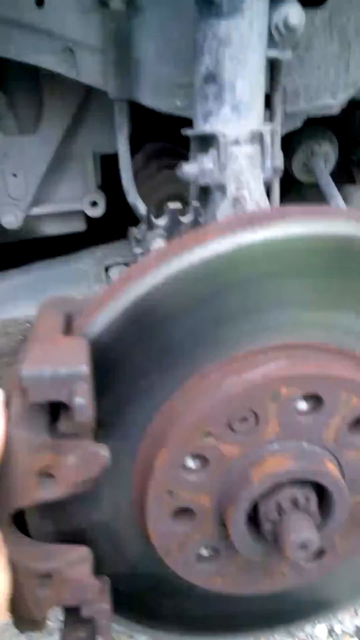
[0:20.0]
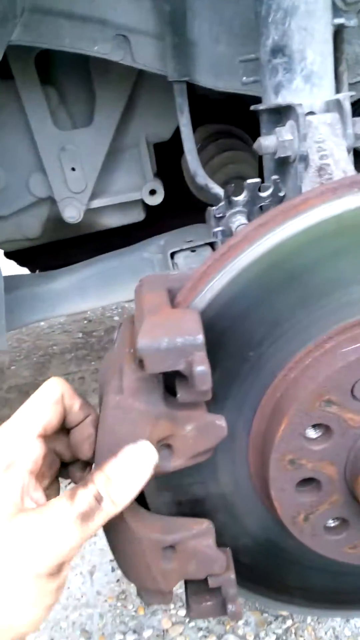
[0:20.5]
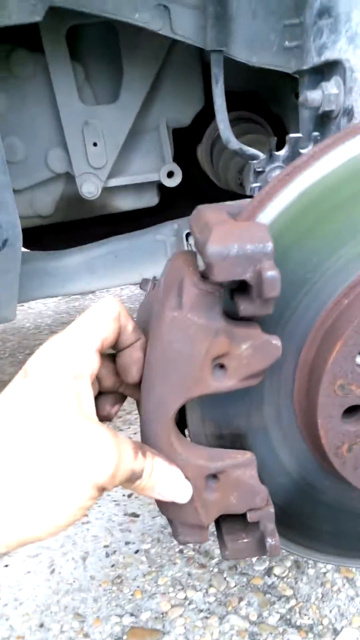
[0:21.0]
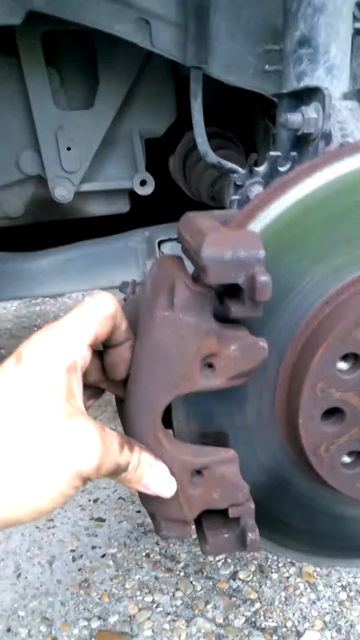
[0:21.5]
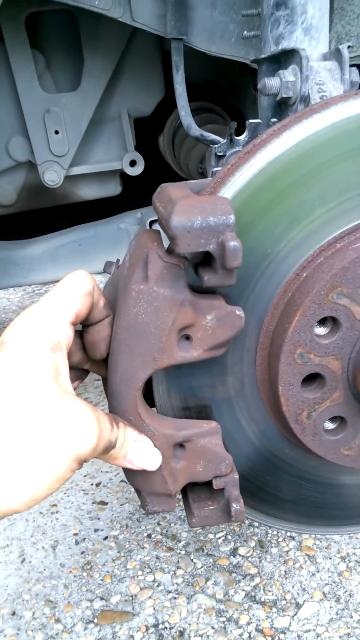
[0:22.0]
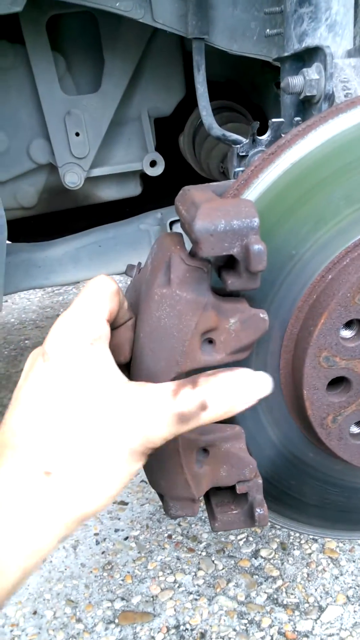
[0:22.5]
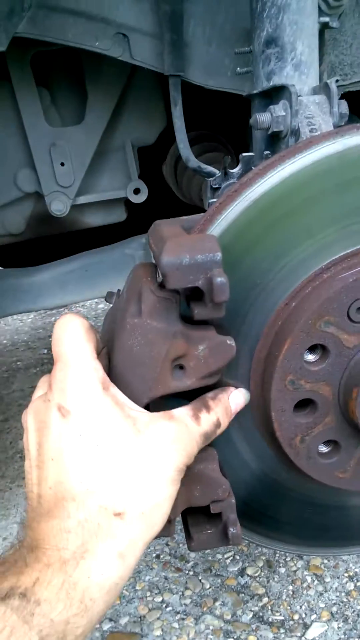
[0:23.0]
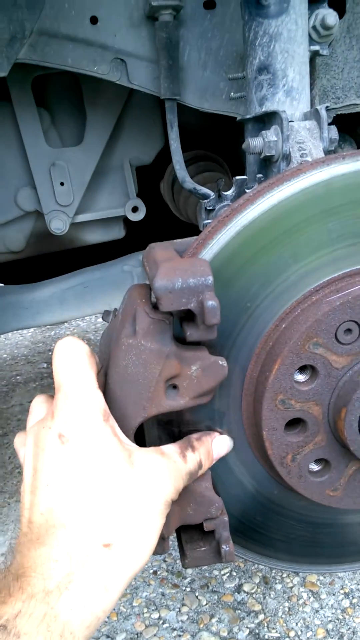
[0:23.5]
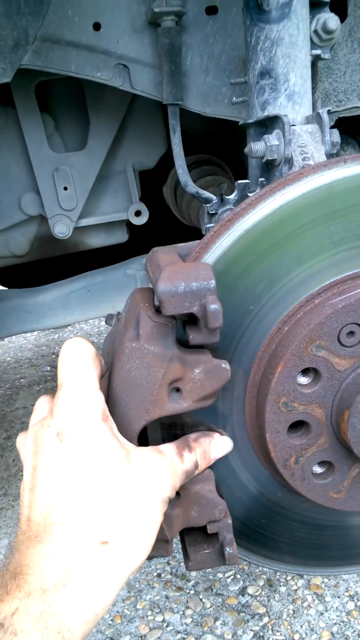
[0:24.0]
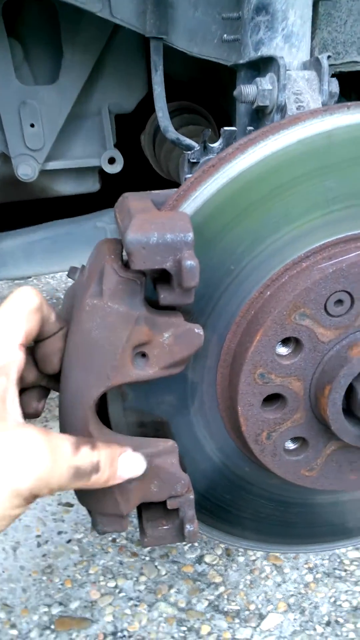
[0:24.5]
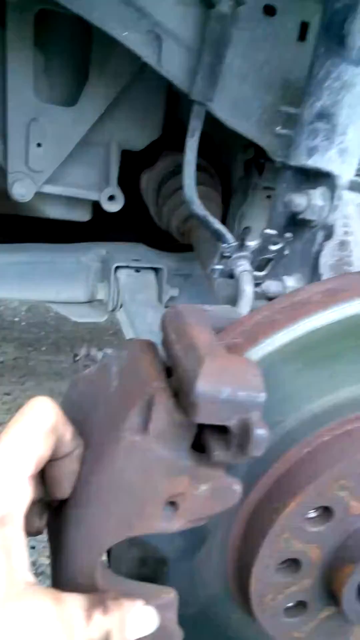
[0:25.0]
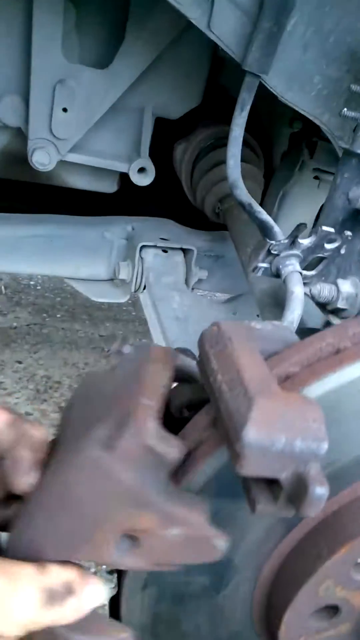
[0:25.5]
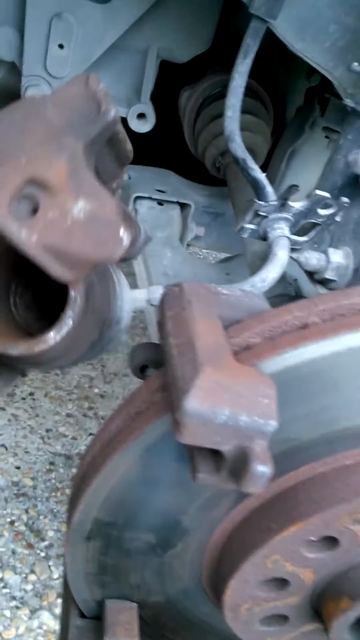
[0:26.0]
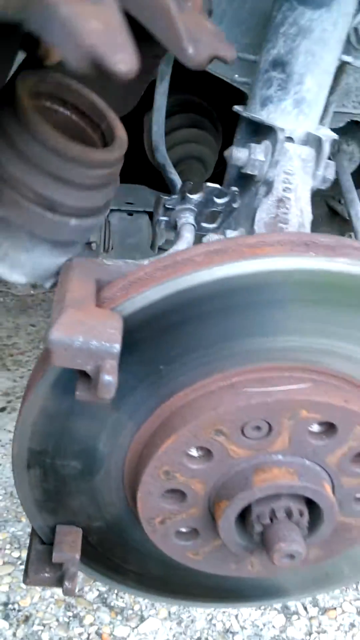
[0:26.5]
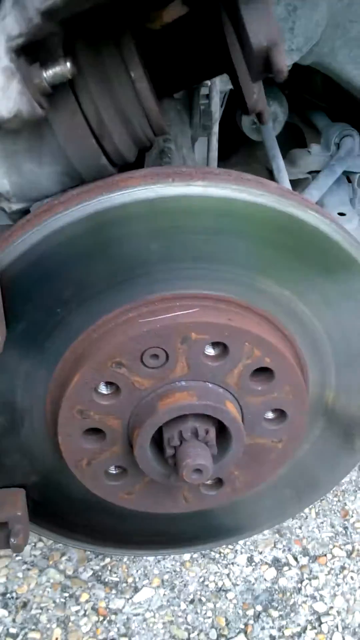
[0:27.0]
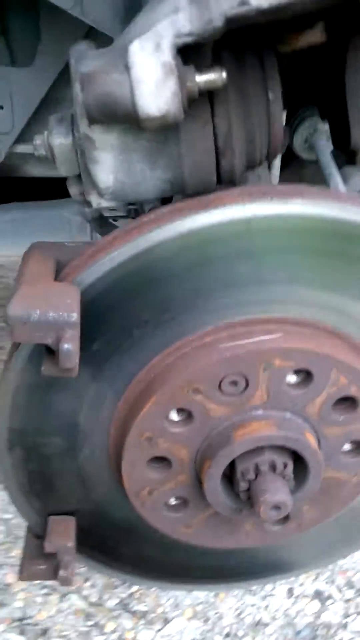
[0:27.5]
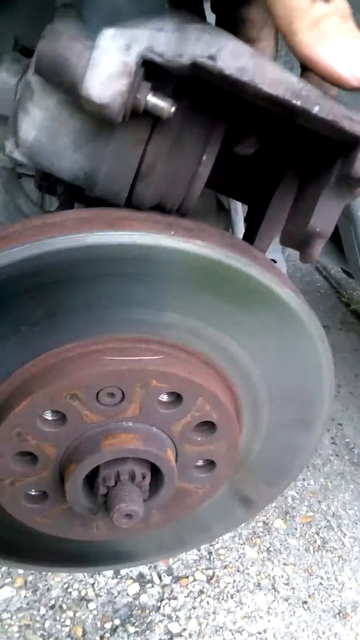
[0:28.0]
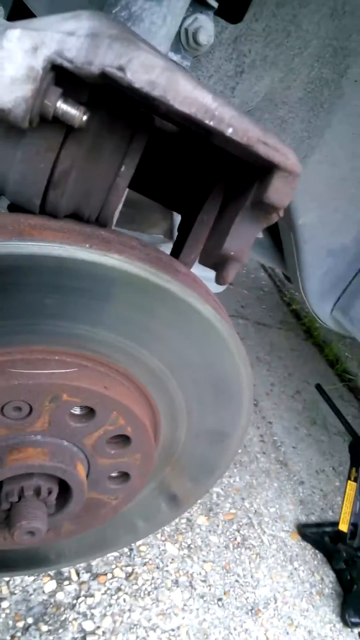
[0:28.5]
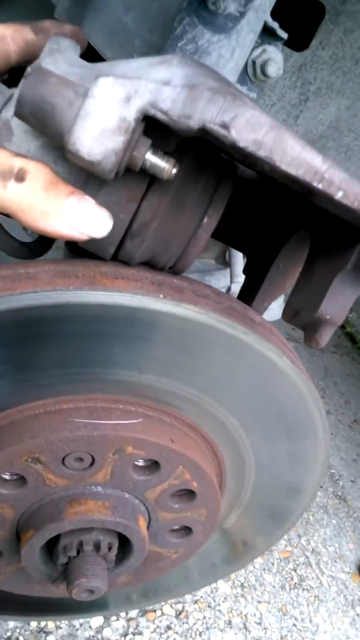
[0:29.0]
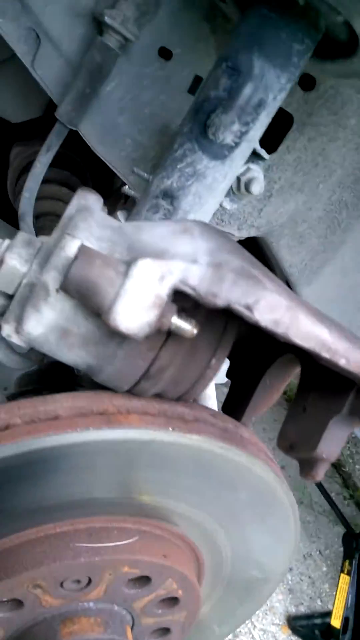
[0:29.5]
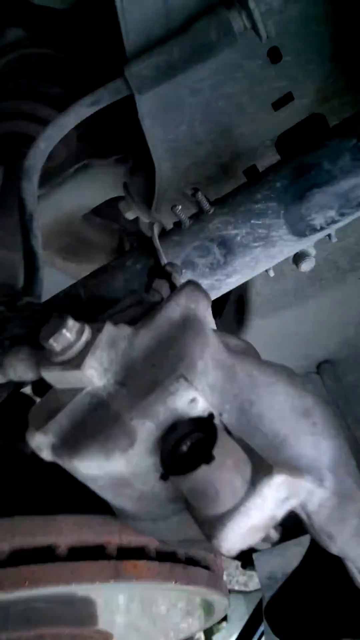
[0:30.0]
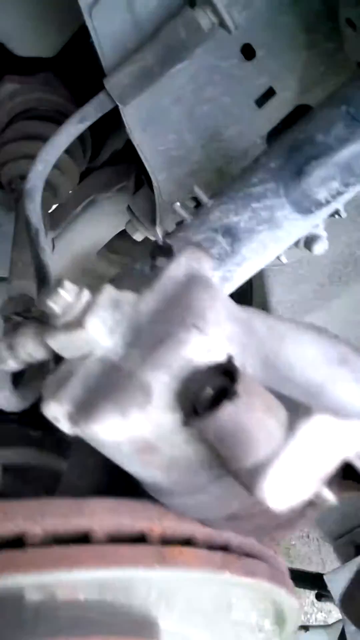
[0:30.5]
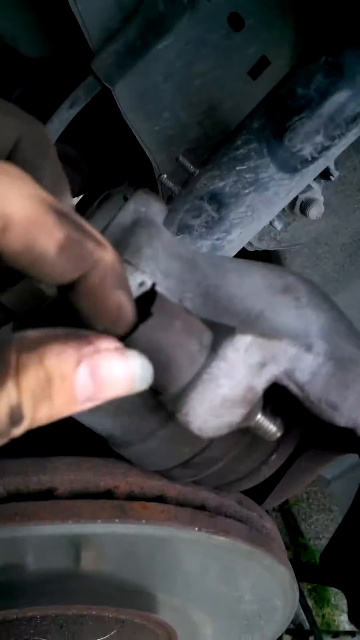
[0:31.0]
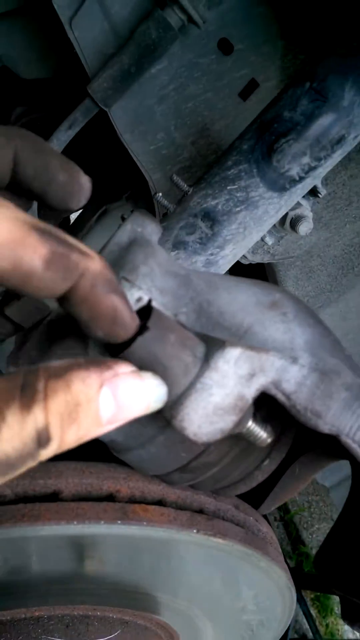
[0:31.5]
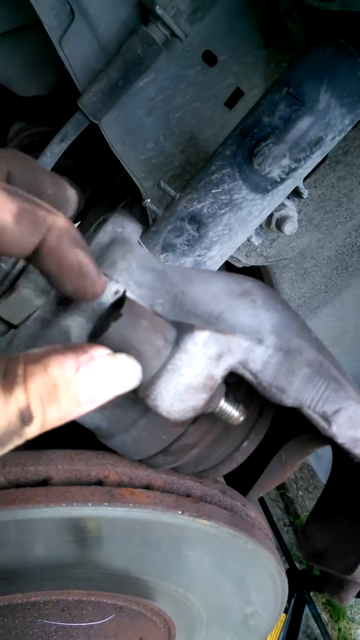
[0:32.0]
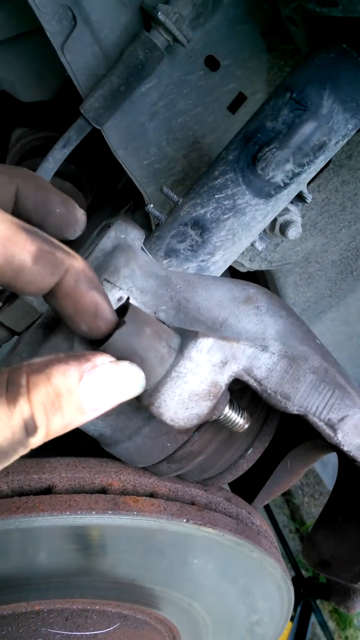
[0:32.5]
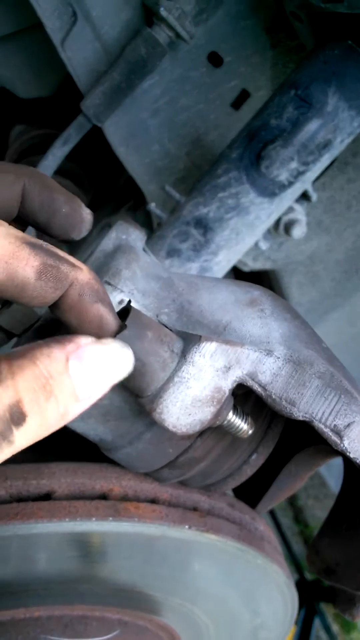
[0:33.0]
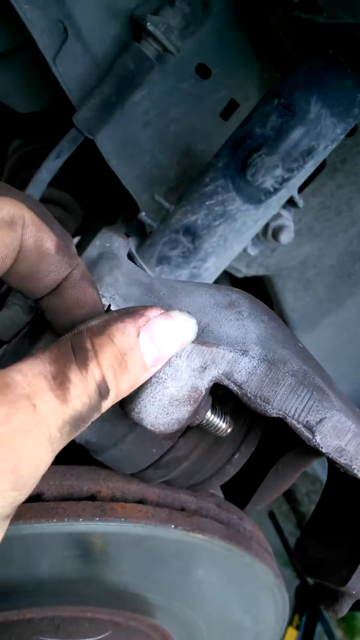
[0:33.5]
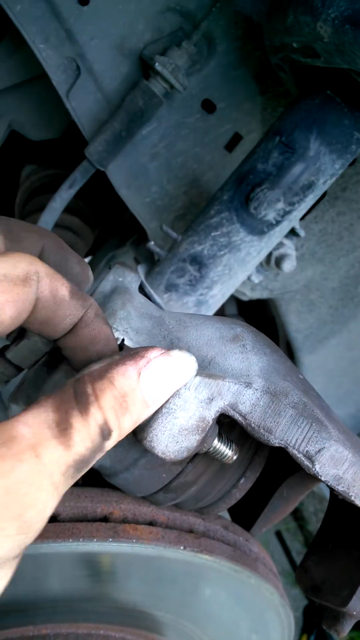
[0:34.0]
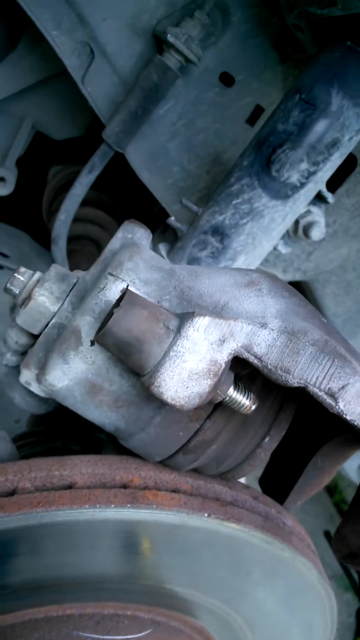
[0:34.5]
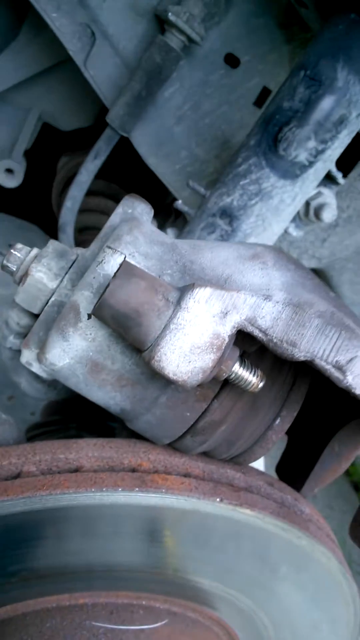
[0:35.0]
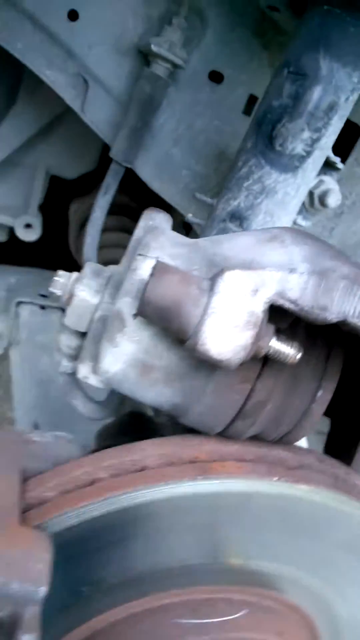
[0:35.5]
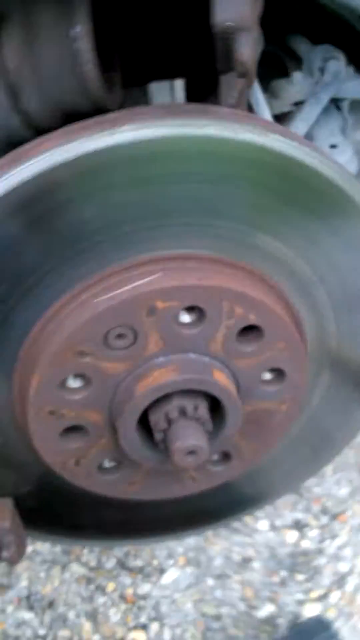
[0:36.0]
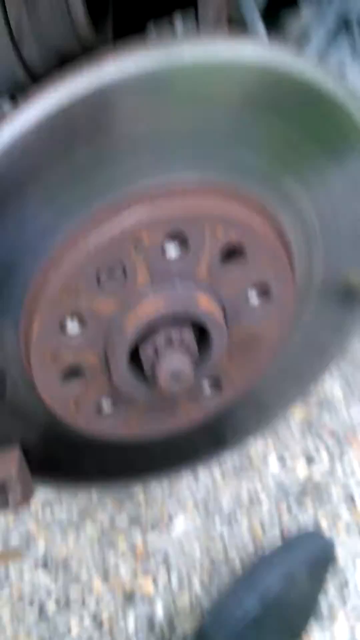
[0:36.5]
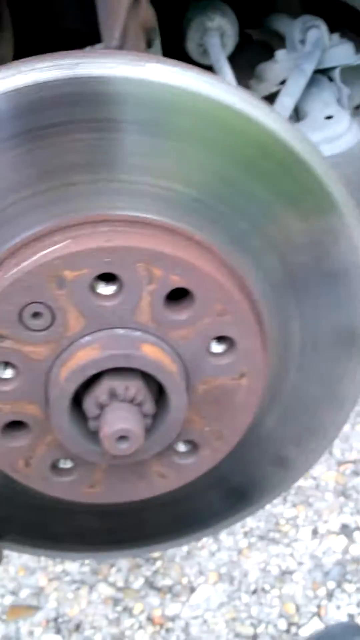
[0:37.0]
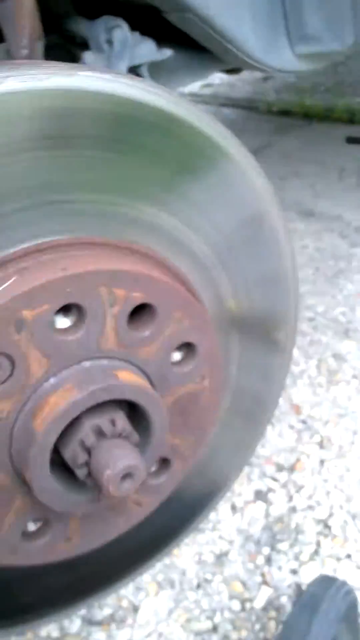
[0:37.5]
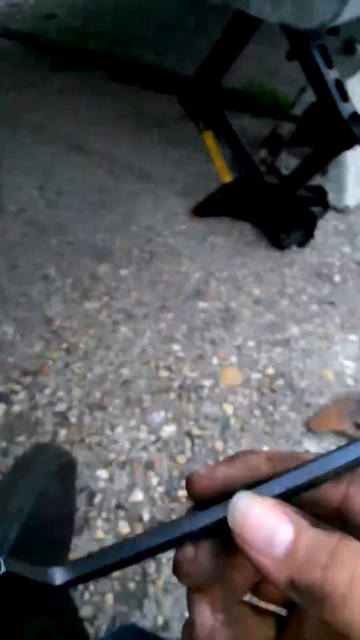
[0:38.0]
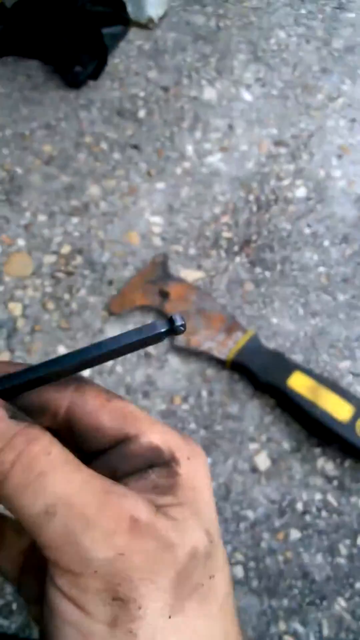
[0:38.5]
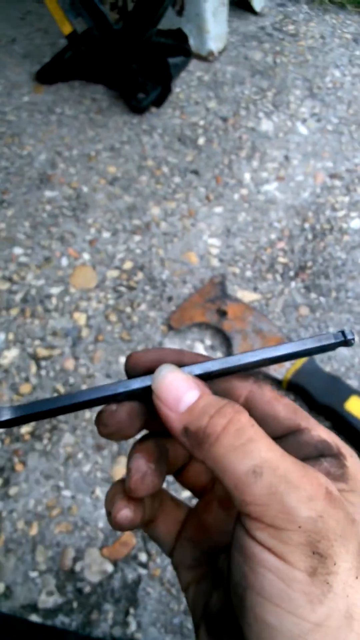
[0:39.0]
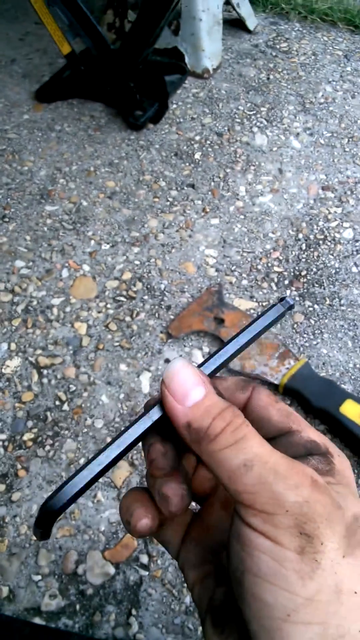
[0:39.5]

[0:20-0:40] A close-up shows possibly a wheel where a tyre gets attached. The man filming holds a mobile phone in his right hand, and the footage is quite wobbly. With his left hand, which is covered in oil, he shows another metal part that attaches onto the metal disc. He places that part on top of the disc and just rests it there to show it in more detail, then uses his thumb and forefinger to grab around a kind of rubber lining that has a screw coming out the other side. He wobbles the camera back down to the silver disc before showing a black rod that looks like a big allen key. The man's foot is visible, and he seems to be sat cross-legged on the floor.